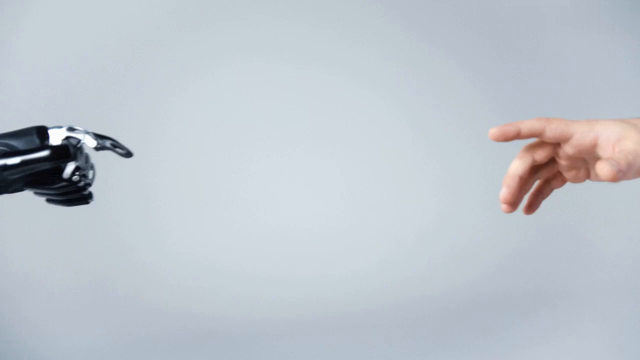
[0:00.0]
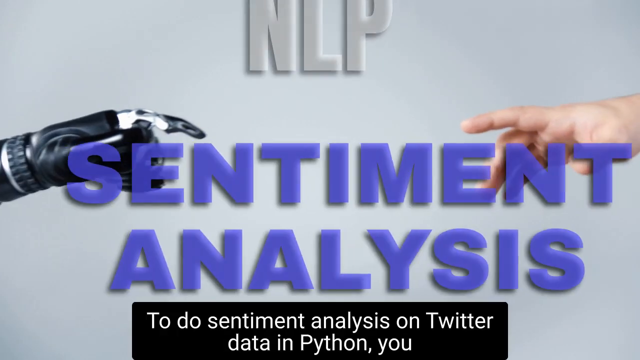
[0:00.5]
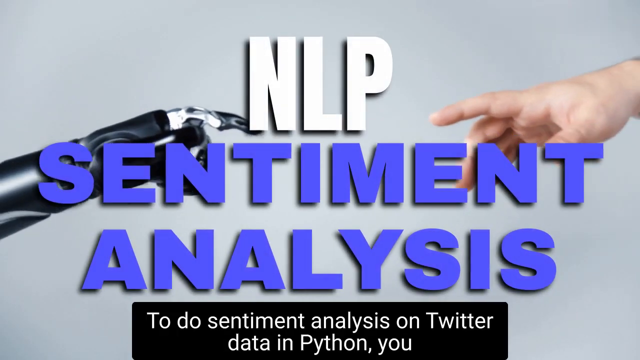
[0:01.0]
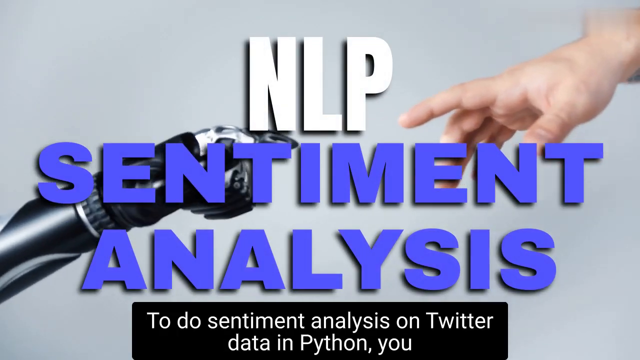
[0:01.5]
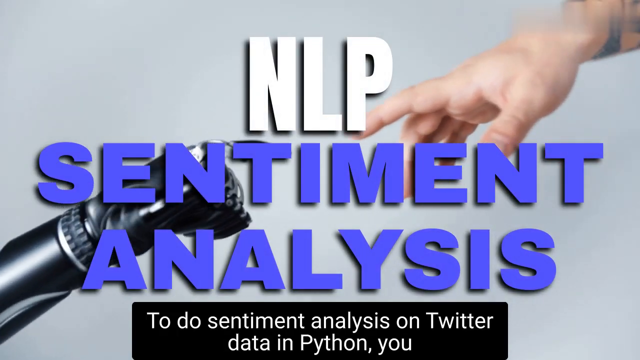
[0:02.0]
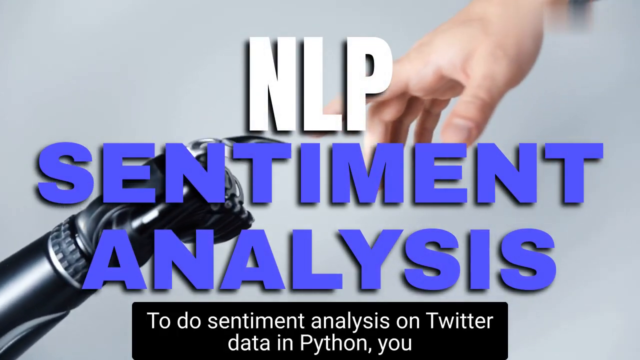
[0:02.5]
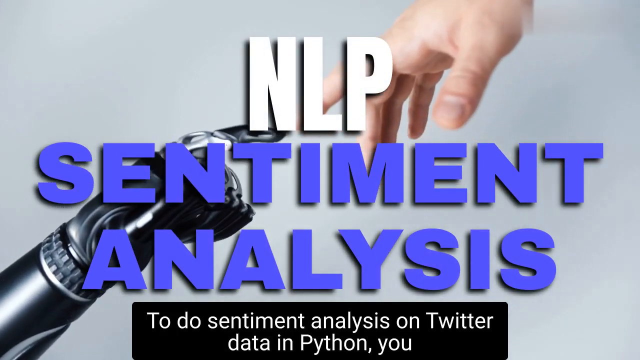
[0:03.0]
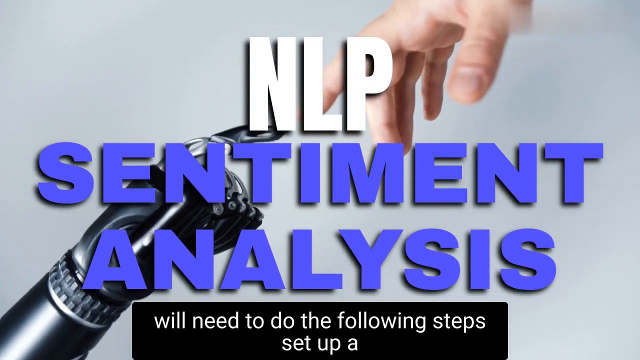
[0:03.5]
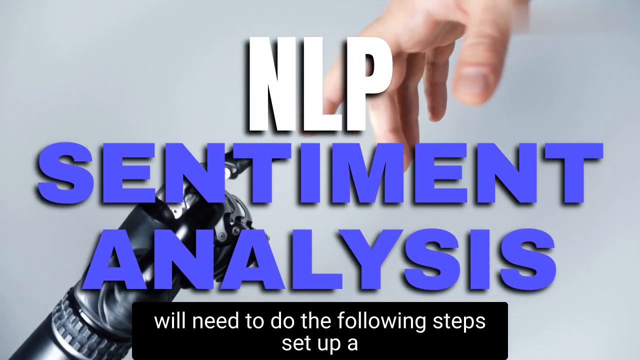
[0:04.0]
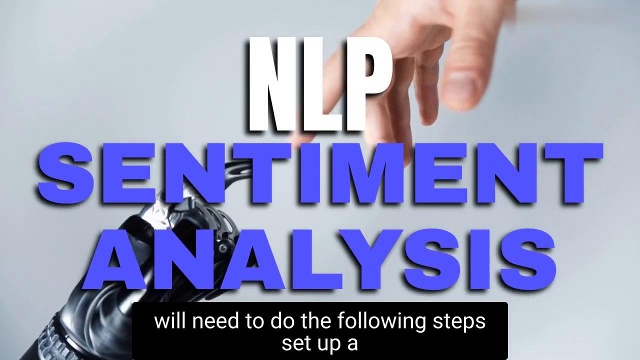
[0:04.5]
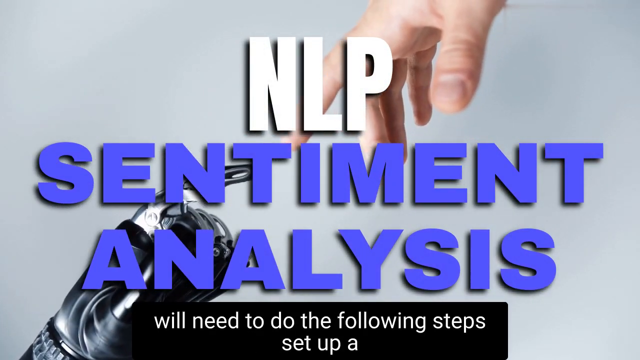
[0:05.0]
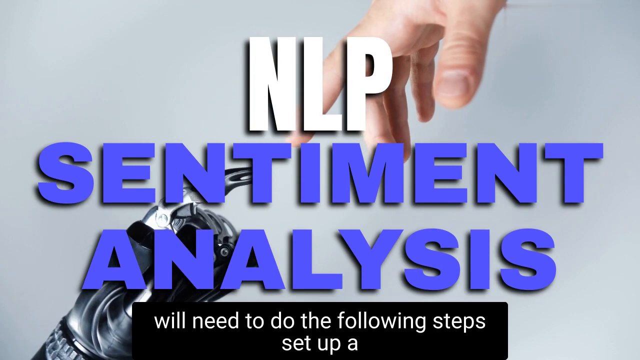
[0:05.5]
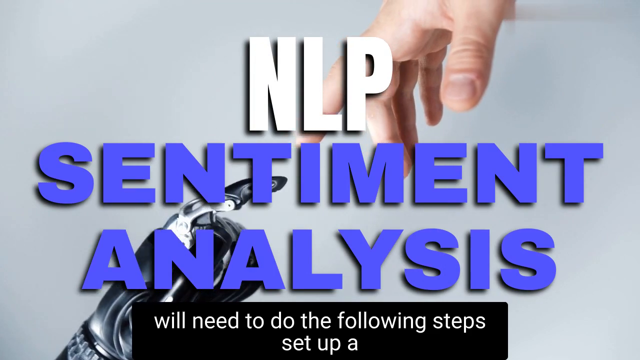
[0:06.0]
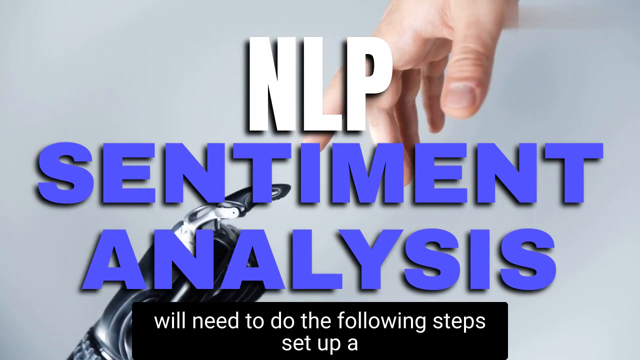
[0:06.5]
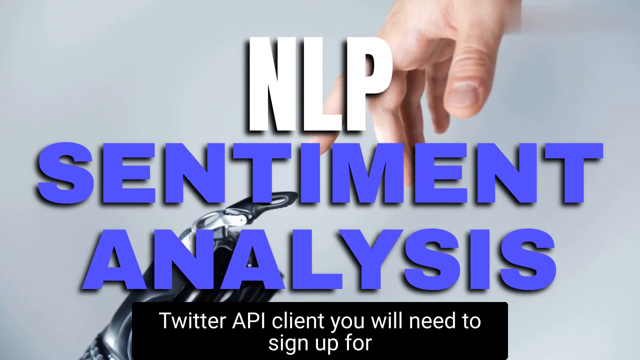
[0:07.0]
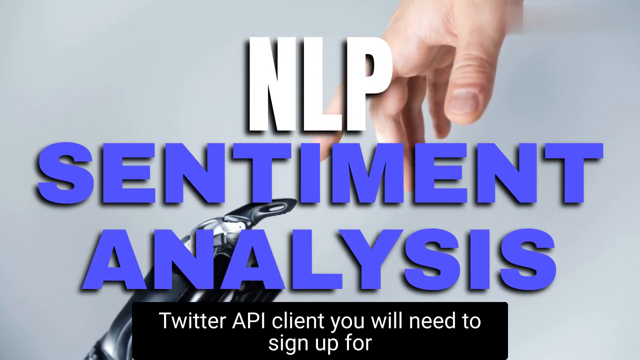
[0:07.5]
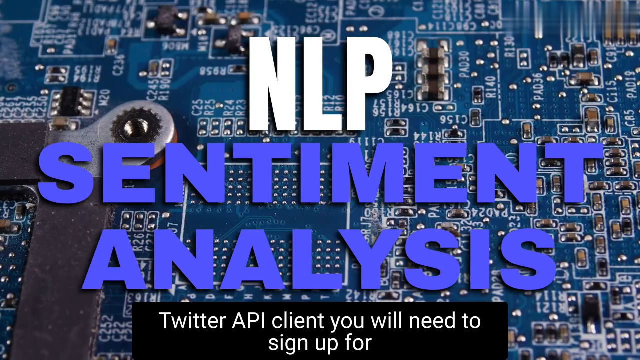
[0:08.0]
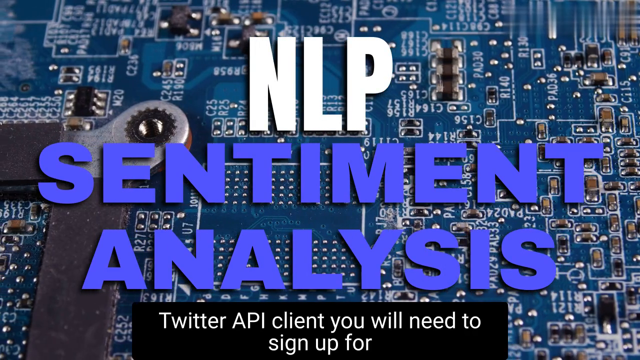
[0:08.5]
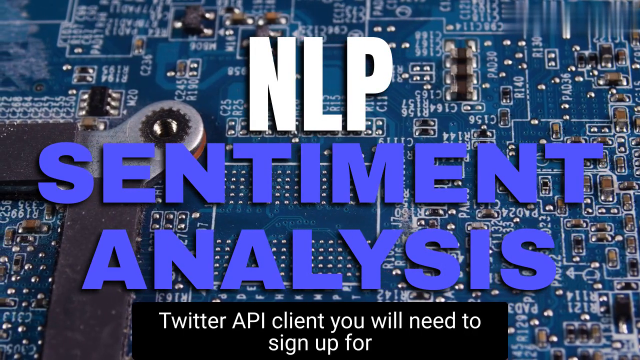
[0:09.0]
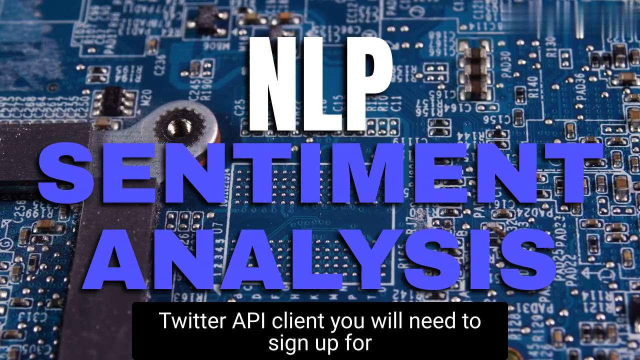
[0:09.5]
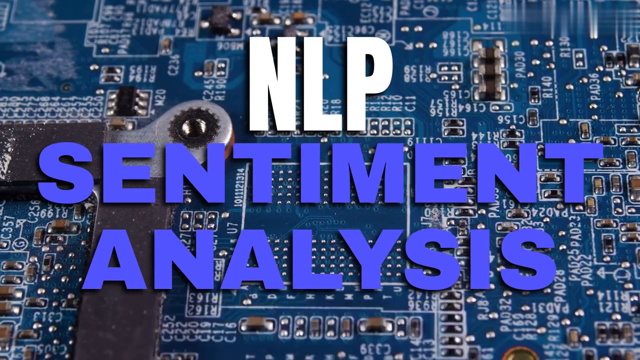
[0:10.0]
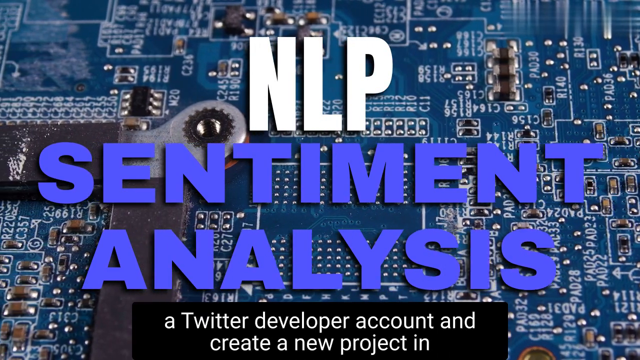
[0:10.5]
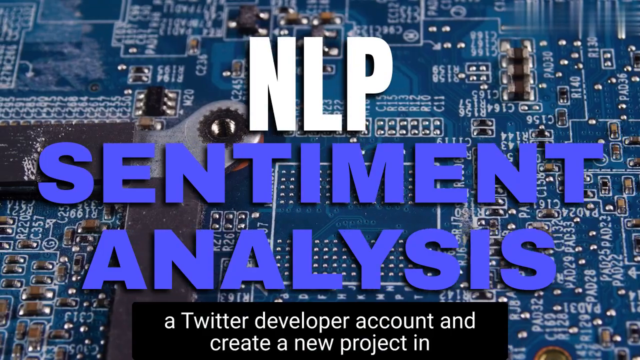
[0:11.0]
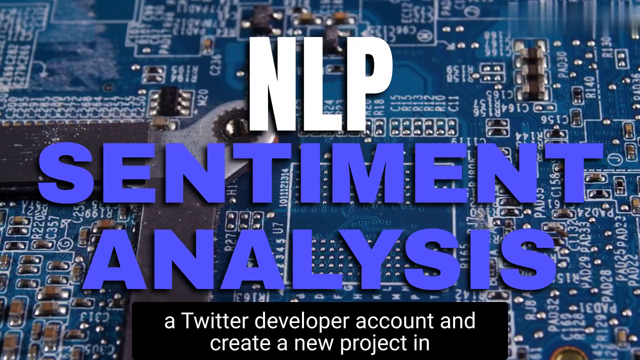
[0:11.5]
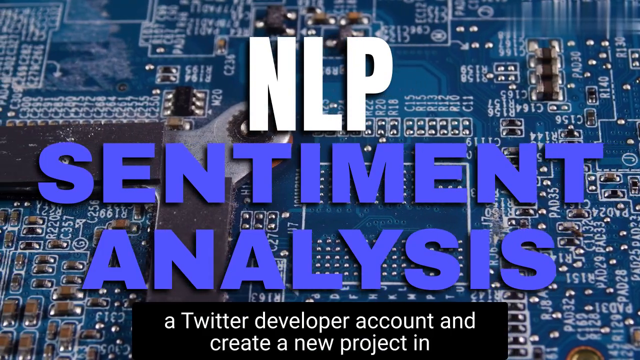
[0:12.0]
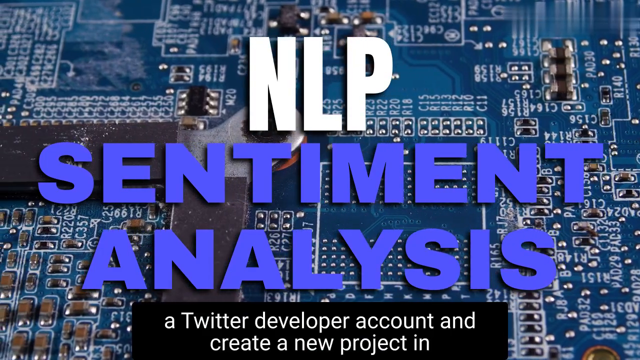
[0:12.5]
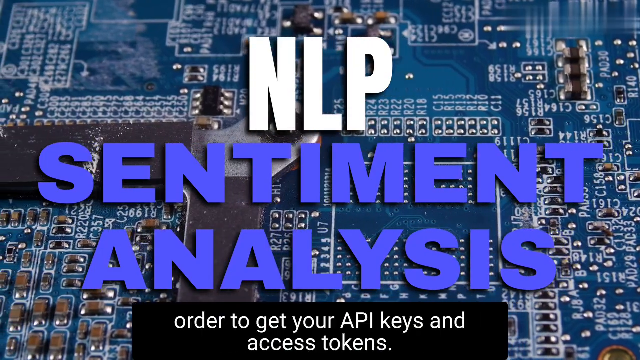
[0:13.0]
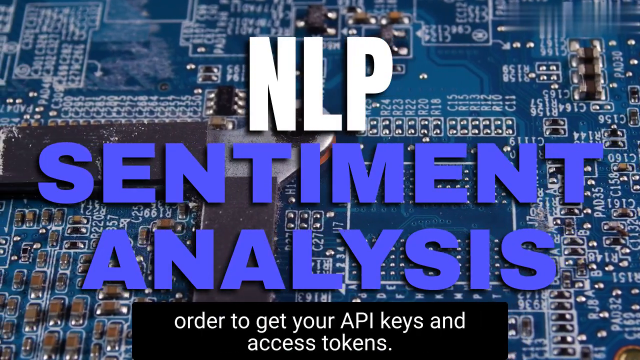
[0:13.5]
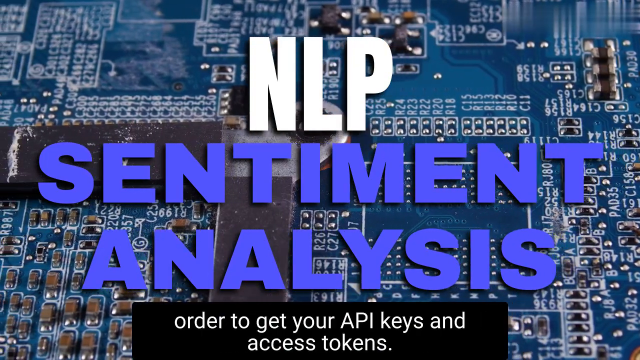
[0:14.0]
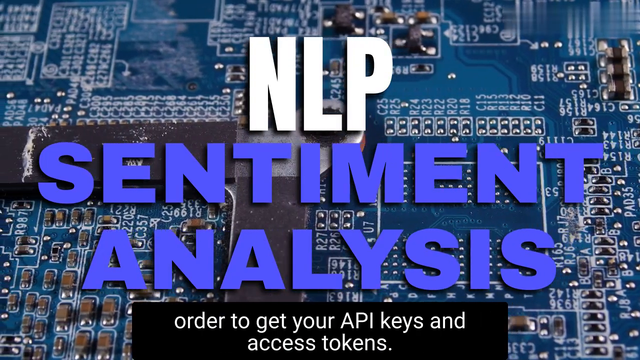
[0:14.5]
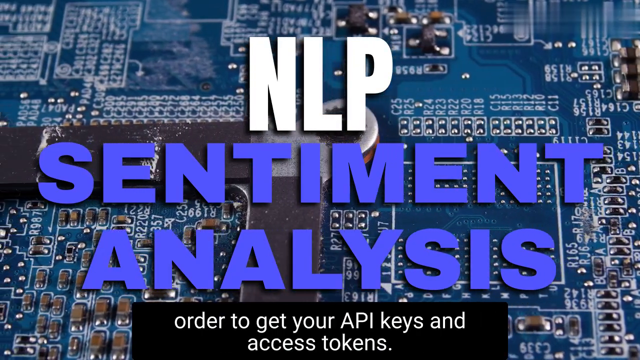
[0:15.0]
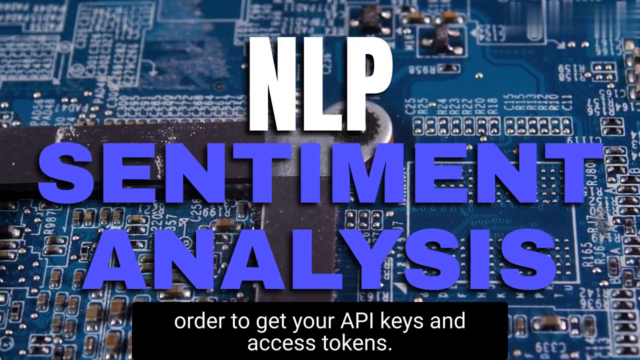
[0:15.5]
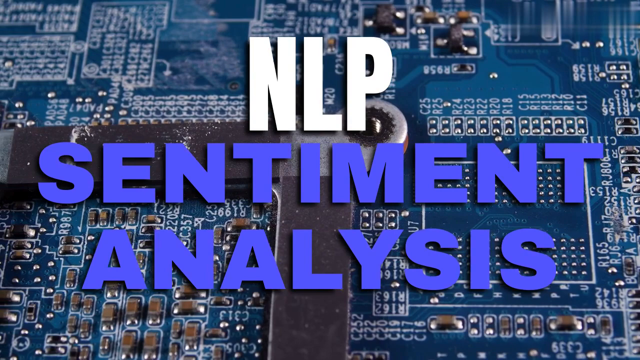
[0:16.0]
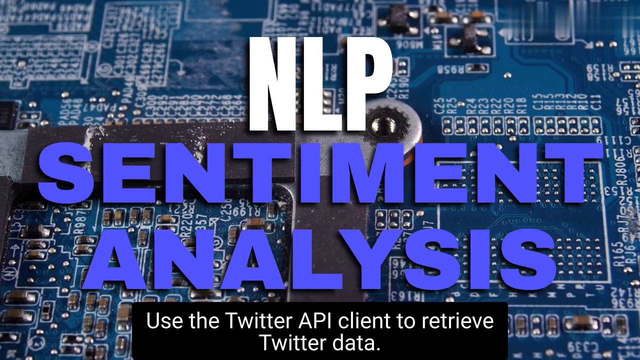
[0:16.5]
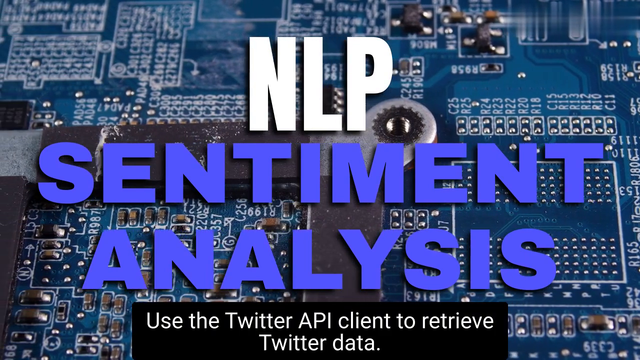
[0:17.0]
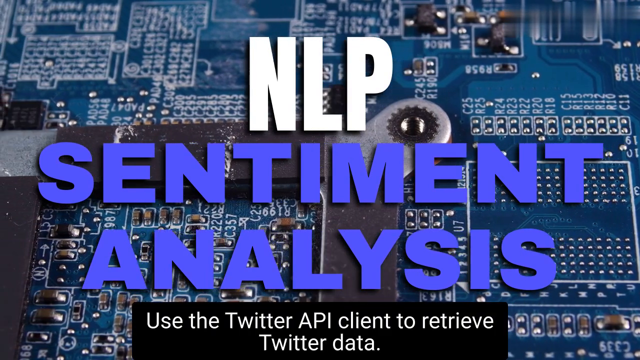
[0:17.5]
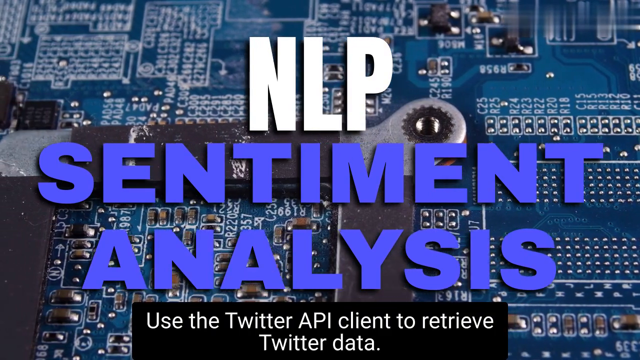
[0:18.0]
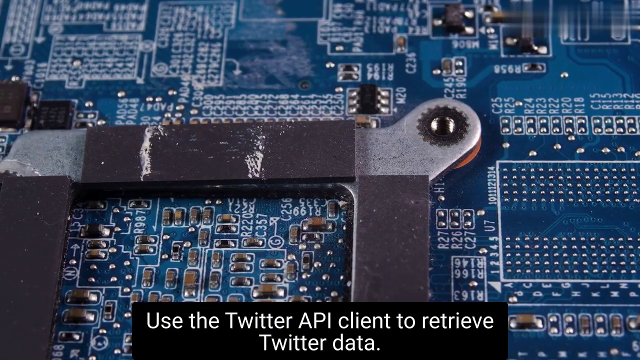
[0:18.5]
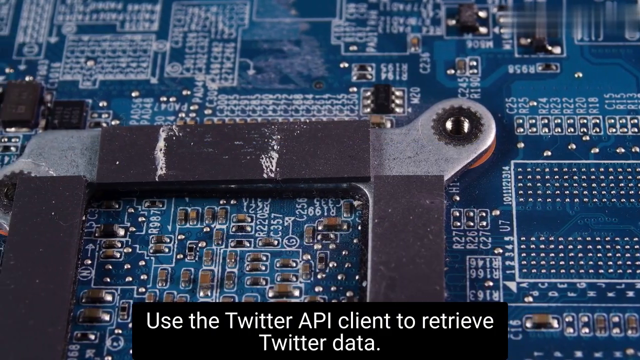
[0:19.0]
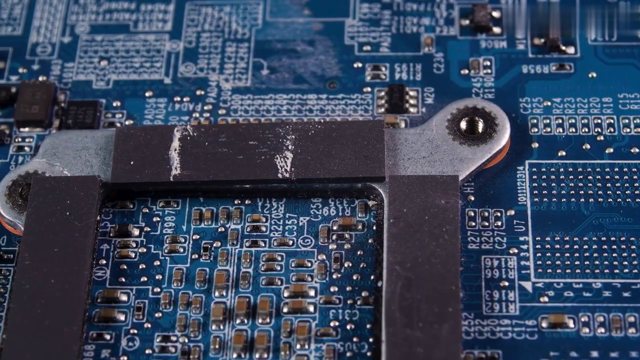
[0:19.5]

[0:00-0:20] Against a gray background, a robot finger and a human finger reach out toward each other but never quite touch. The words "NLP sentiment analysis" appear in a black box. Small text then begins appearing at the bottom of the screen and moves quickly; it mentions a Twitter API client to sign up for, a Twitter developer account, and getting API keys and access tokens, and it says to "use a Twitter API client to retrieve the data." While the black text box scrolls along the bottom, the original gray background changes to a computer chip background, which scrolls for a long time. The text overall concerns sentiment analysis on Twitter using Python, with "NLP sentiment analysis" as the main heading.